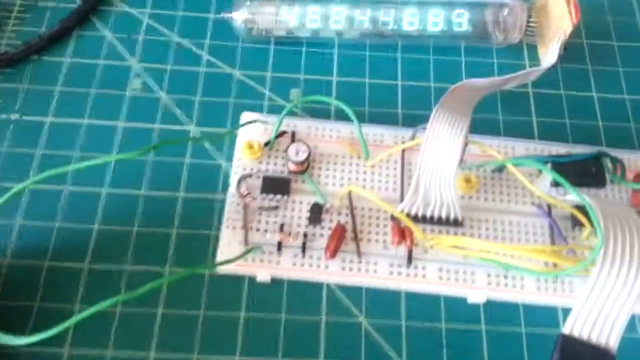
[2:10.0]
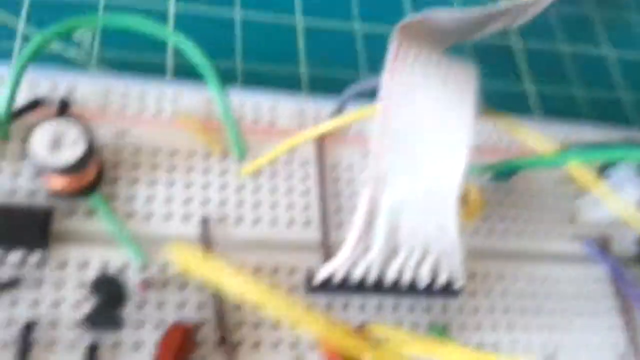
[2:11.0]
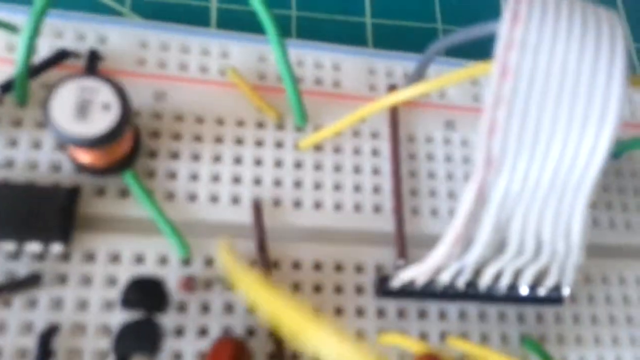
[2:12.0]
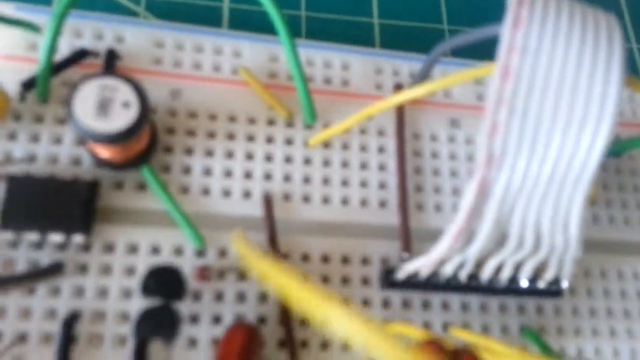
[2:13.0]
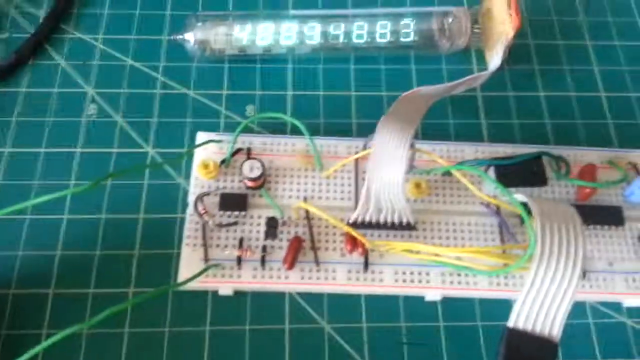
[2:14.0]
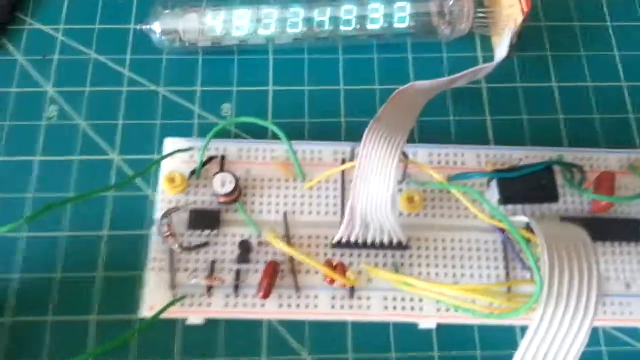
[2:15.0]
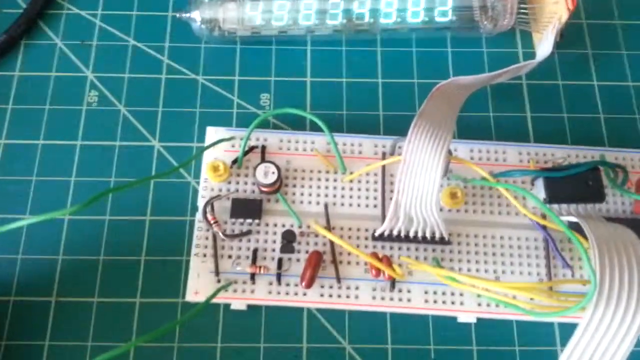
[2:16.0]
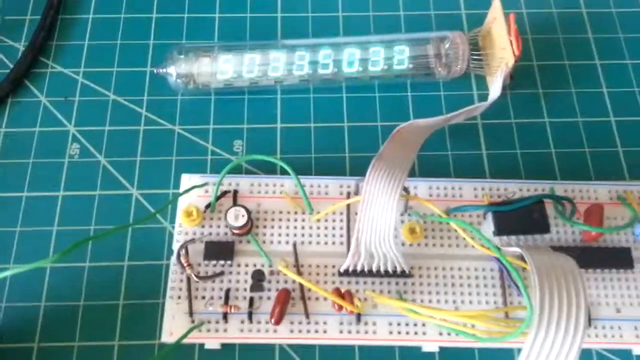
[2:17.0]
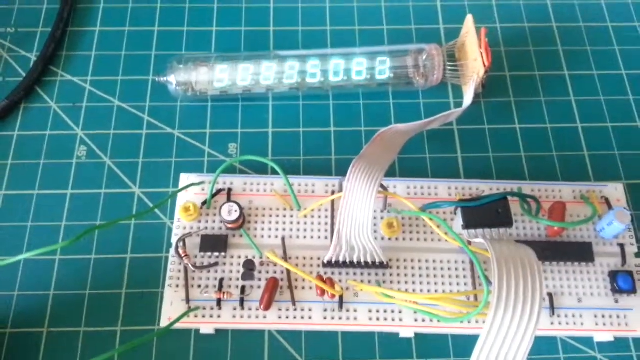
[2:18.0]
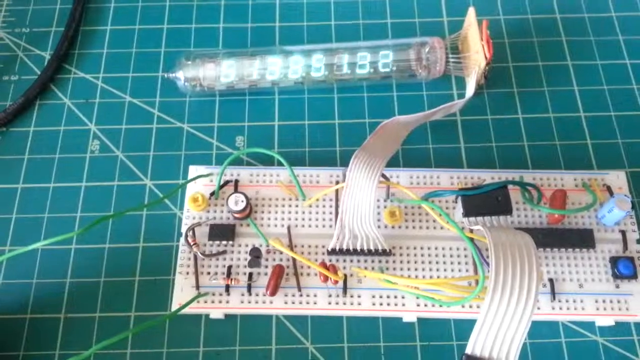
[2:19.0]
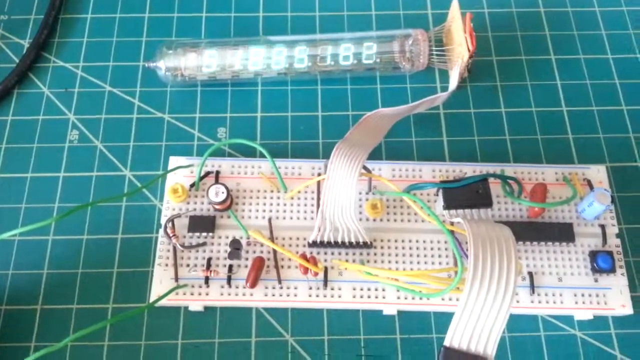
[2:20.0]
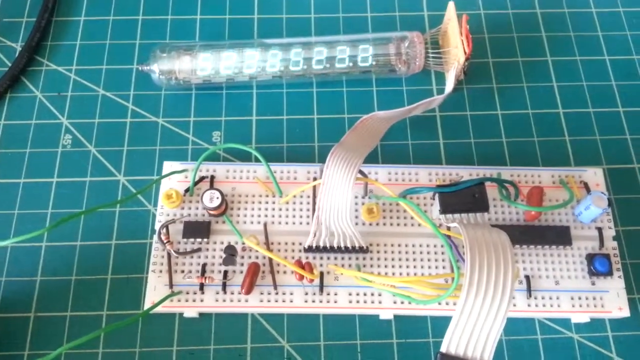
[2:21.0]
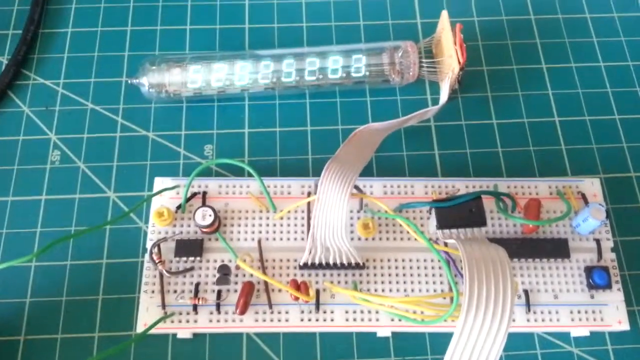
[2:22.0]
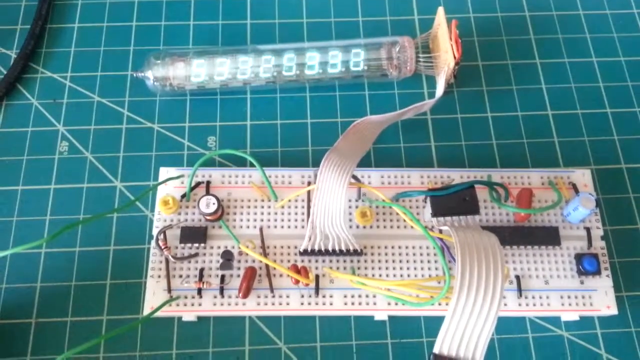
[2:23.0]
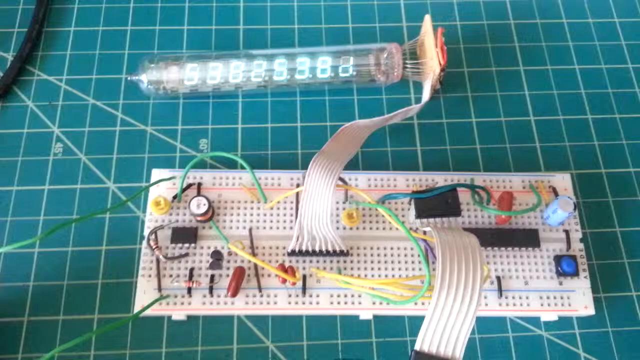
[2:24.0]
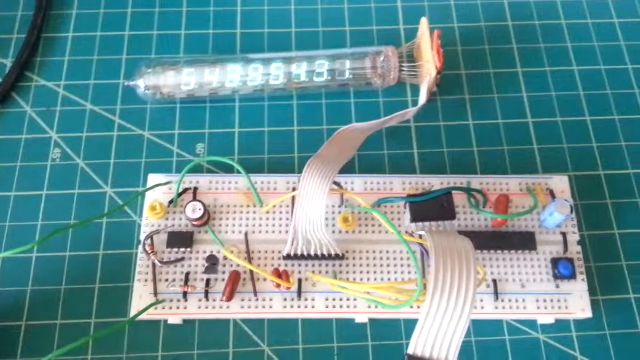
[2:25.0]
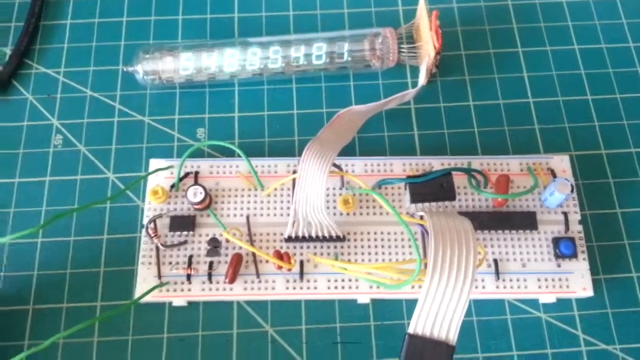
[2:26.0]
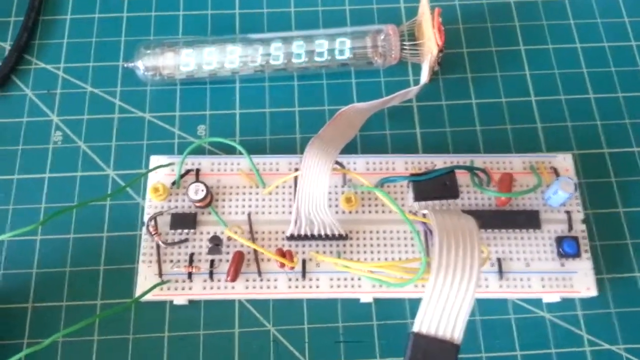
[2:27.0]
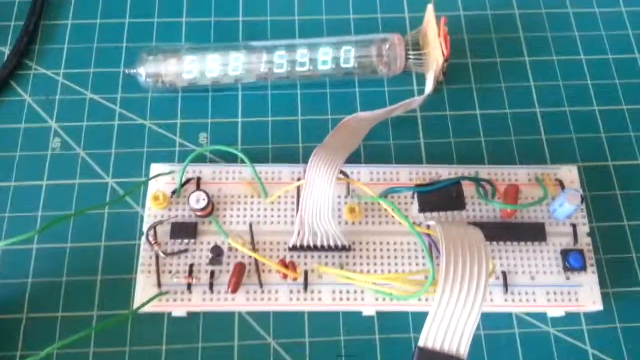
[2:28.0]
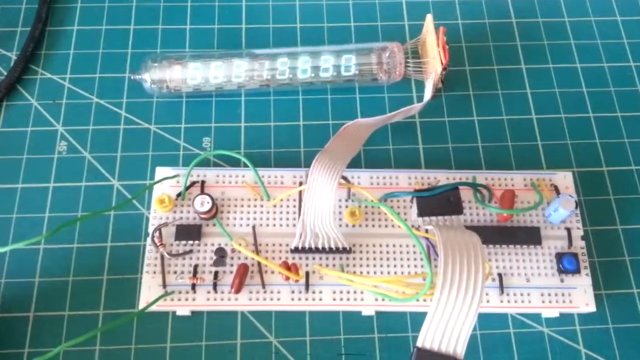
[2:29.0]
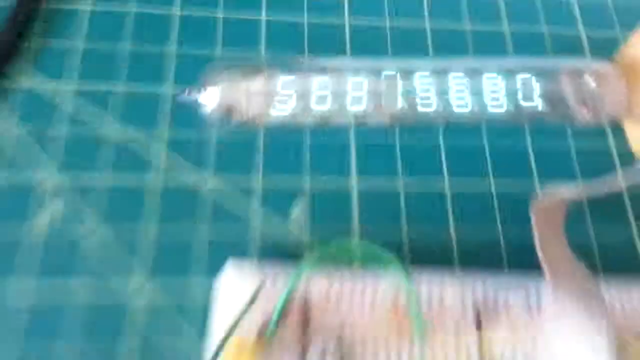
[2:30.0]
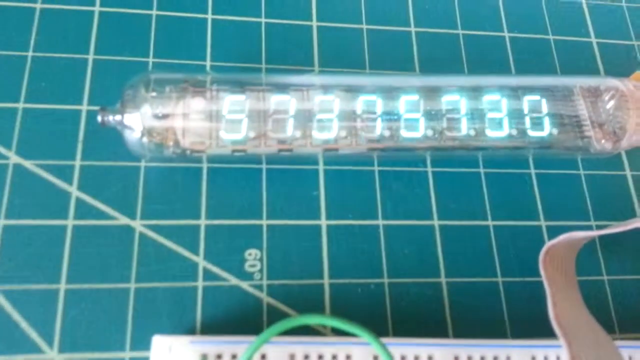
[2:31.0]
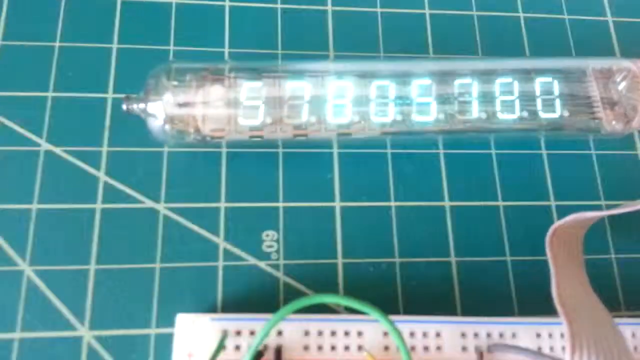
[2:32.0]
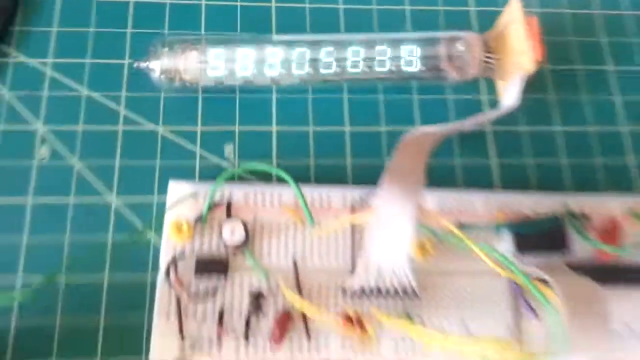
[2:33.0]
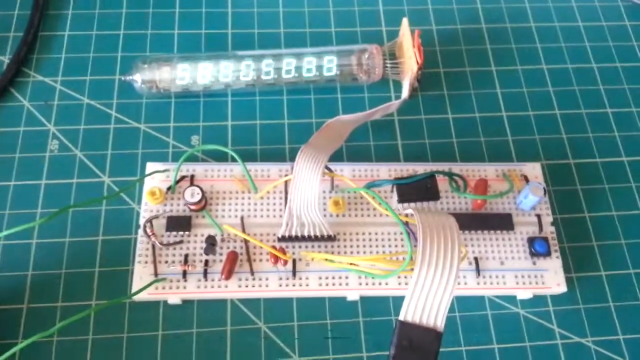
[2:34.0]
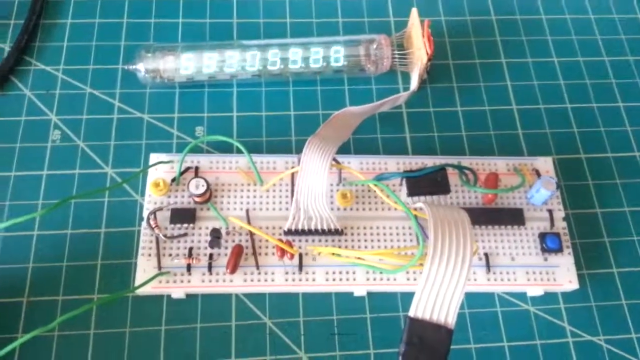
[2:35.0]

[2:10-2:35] The camera first zooms in on the white connectors on the left, focusing on the cables connected there, then moves away and comes closer to the LED values, which are easier to read up close. The first digit is a 5, so the value has jumped to around 500 or possibly a much larger number; the number of zeros is hard to make out. Something appears to be touching the cable, maybe a copper cable that seems to come out of the ground and the current.